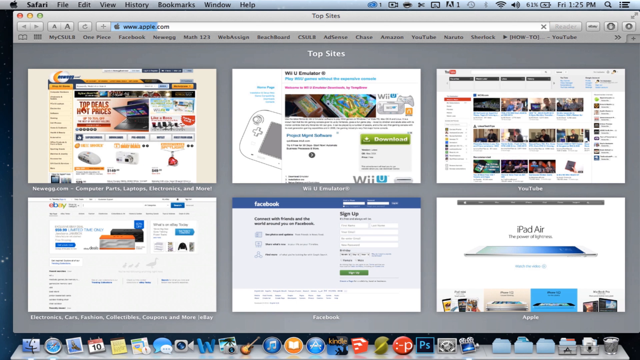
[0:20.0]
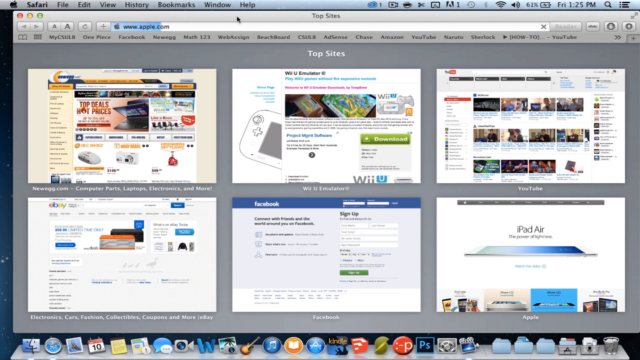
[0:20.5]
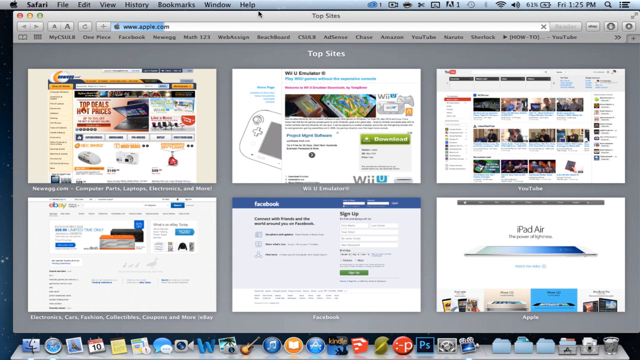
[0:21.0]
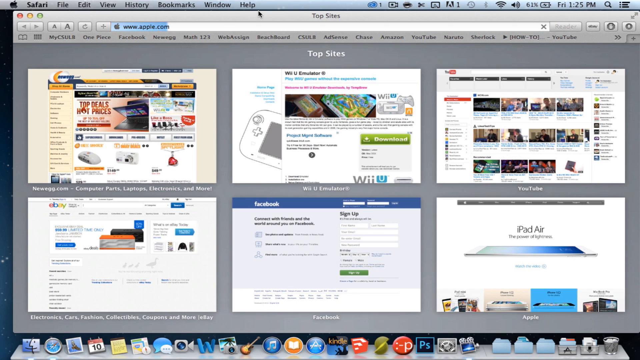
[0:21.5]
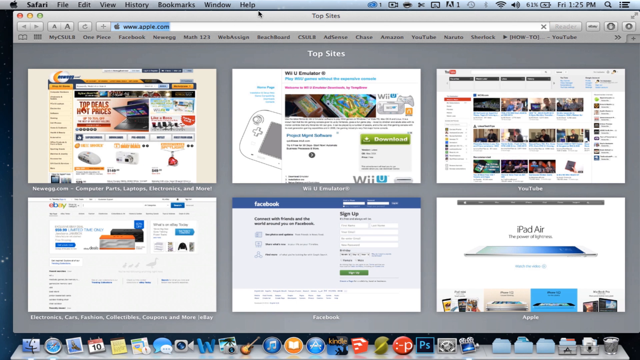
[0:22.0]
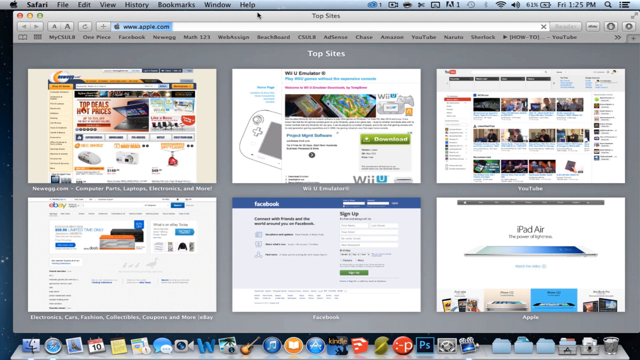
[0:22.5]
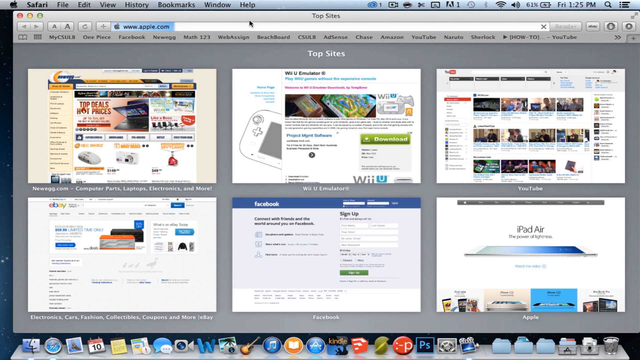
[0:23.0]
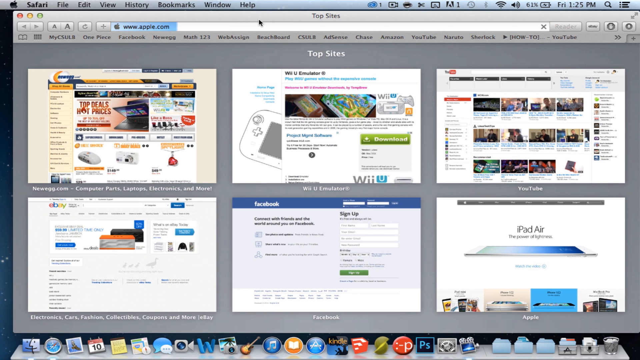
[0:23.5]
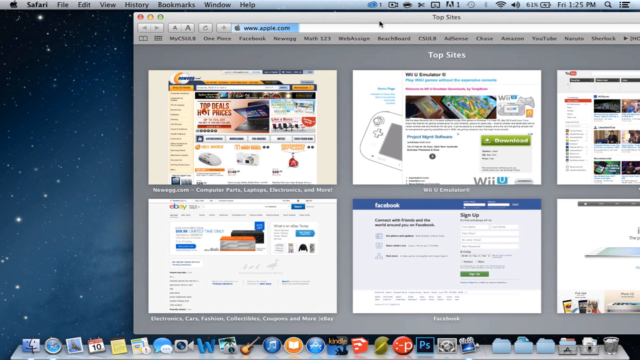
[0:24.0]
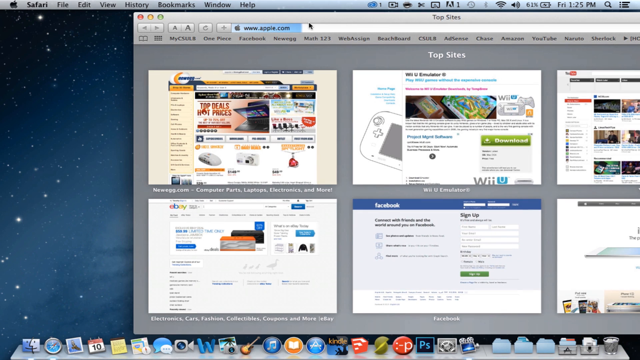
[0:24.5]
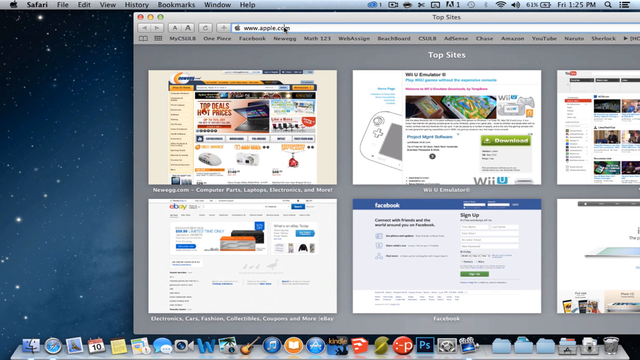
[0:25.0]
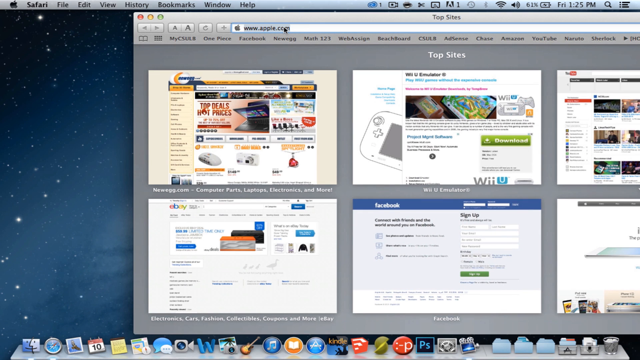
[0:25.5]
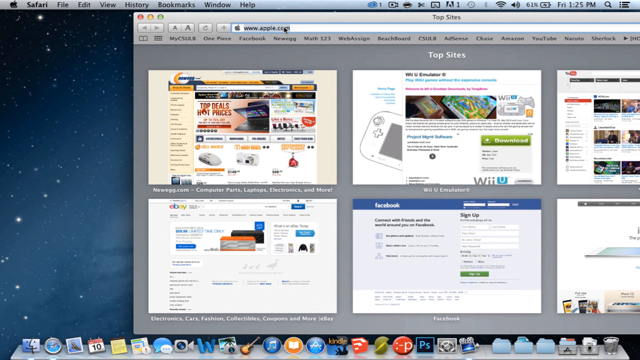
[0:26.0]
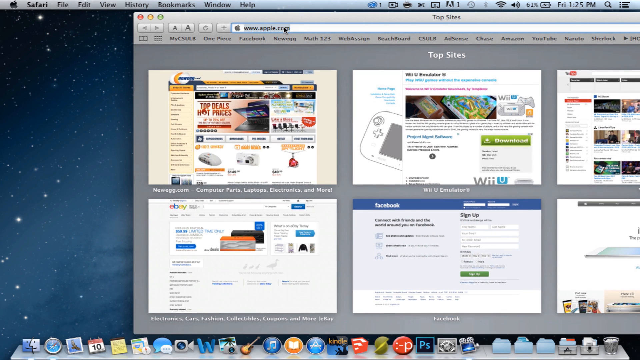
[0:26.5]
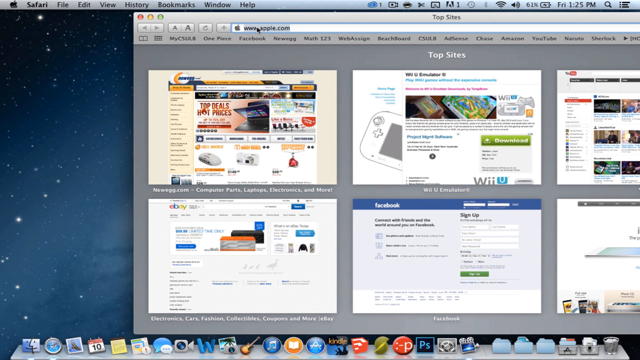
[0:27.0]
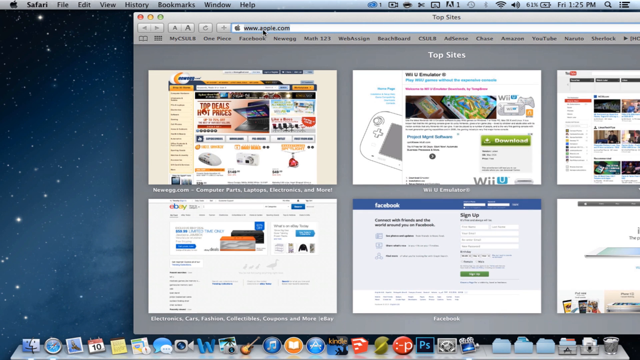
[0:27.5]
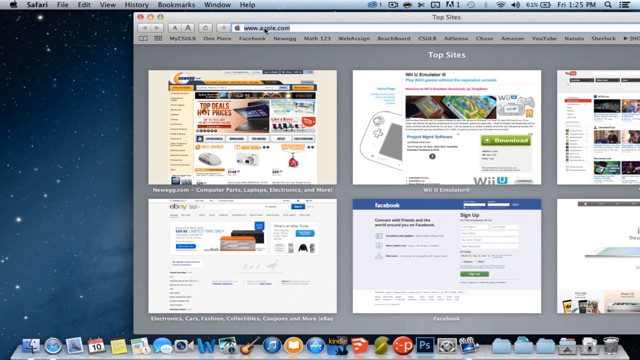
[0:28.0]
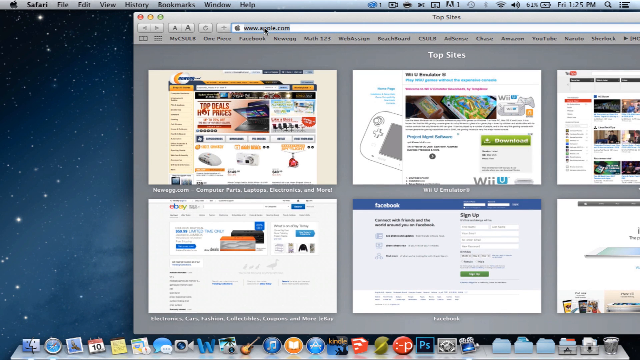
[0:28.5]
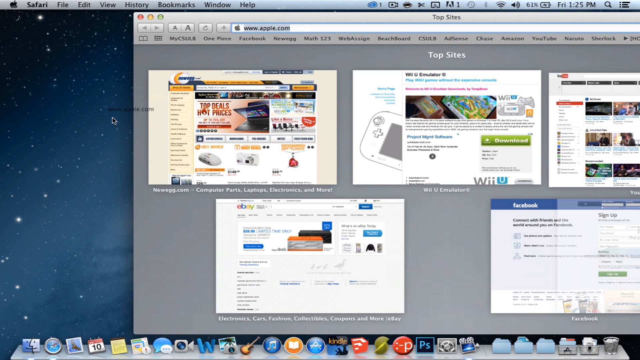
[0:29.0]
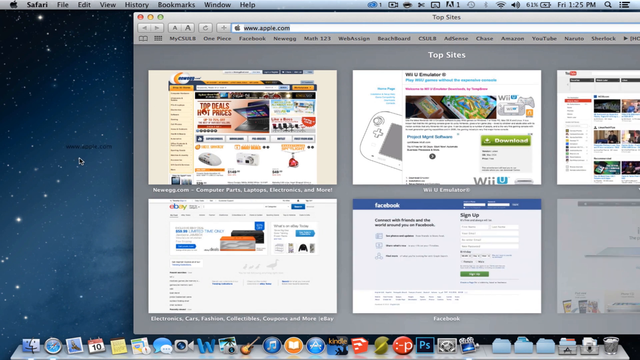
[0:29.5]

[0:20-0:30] The Safari window is on the right of the screen while the Apple homepage is still loading. Once the site finishes loading, the user clicks somewhere on the page, possibly to make it active, then drags the URL from the address bar over to the left side of the desktop. The link appears as a shortcut icon on the desktop background, apparently demonstrating how to create a quick-access website shortcut on macOS by dragging a link from Safari to the desktop.